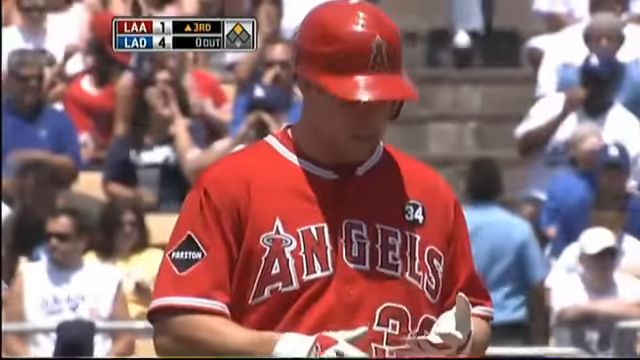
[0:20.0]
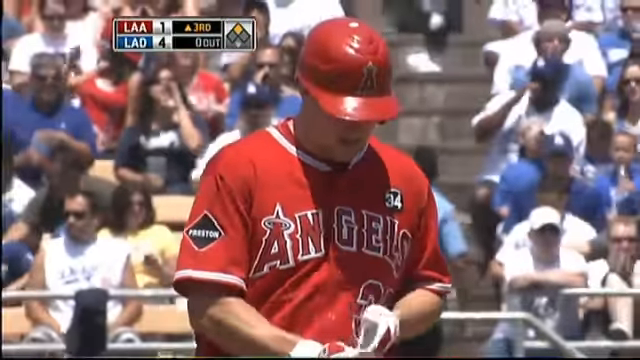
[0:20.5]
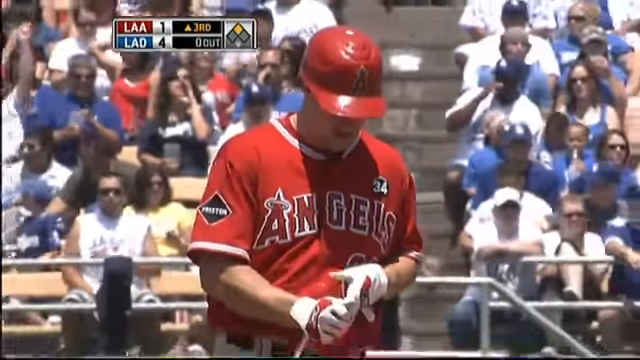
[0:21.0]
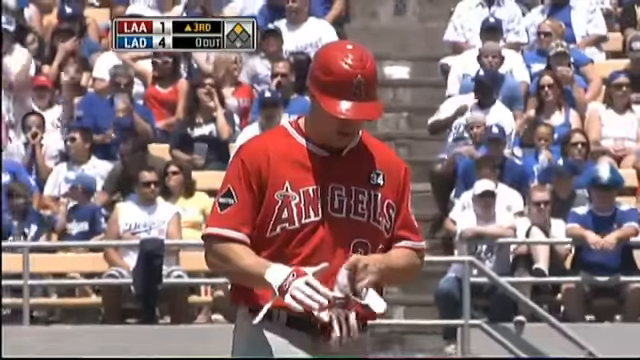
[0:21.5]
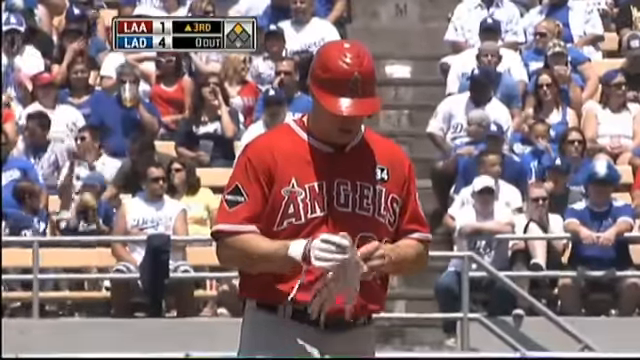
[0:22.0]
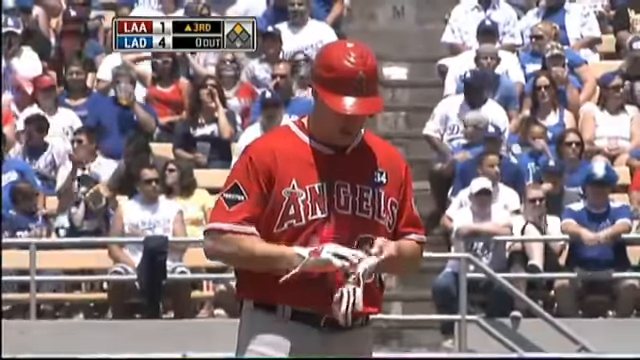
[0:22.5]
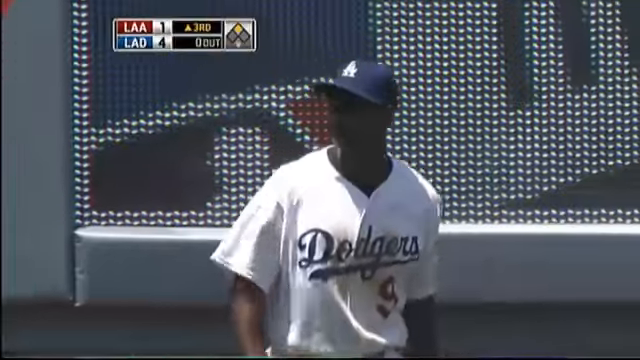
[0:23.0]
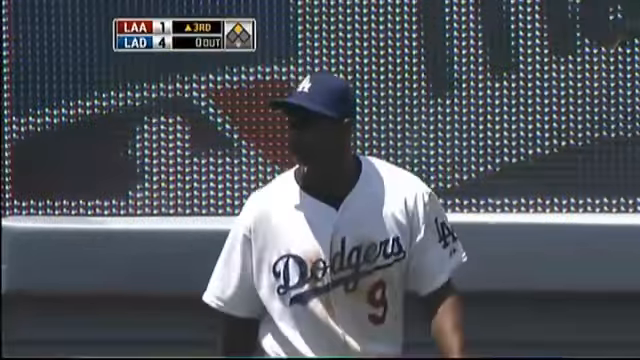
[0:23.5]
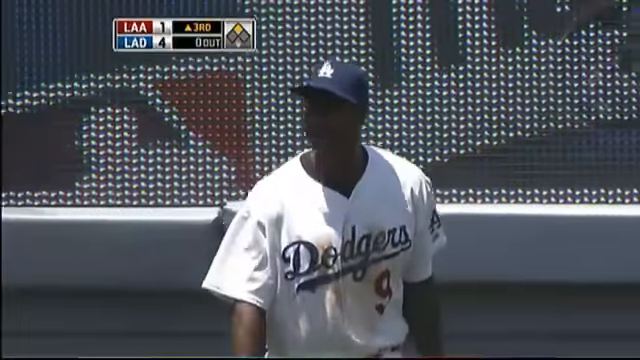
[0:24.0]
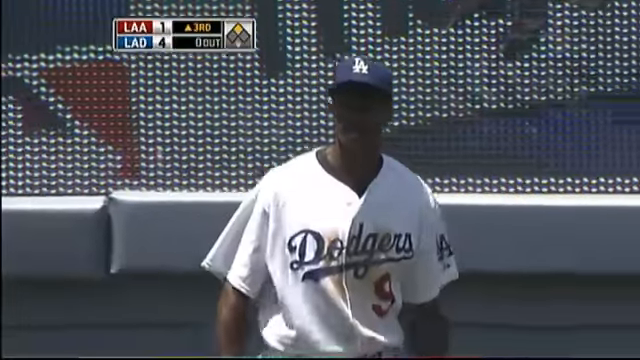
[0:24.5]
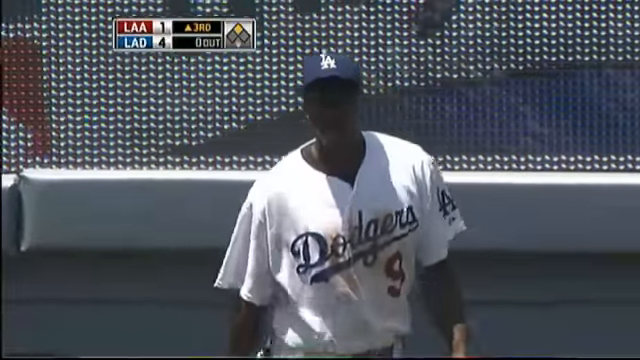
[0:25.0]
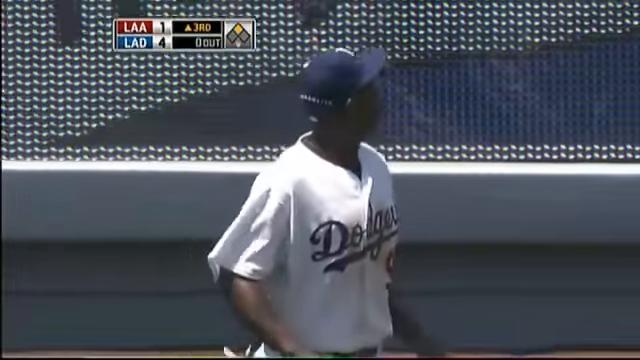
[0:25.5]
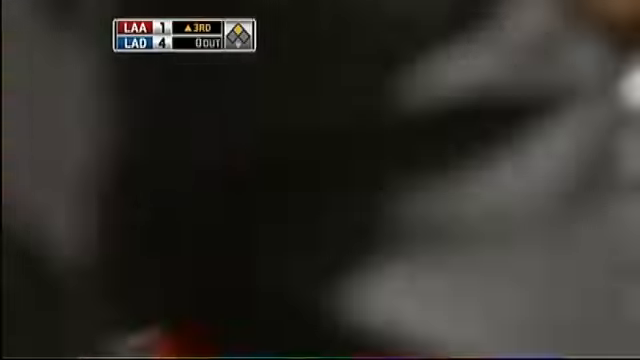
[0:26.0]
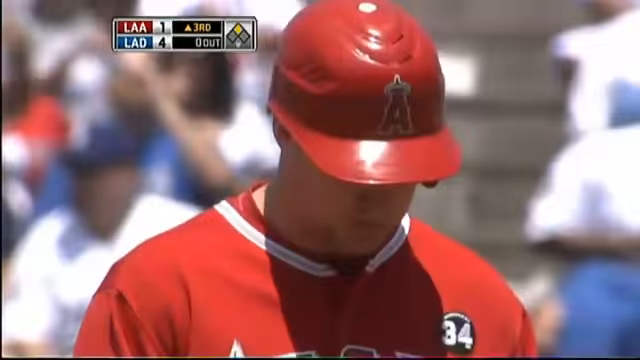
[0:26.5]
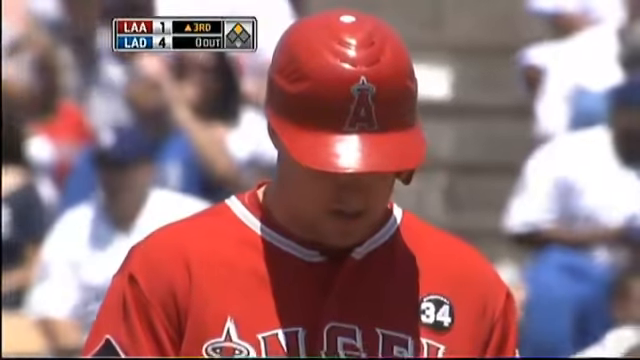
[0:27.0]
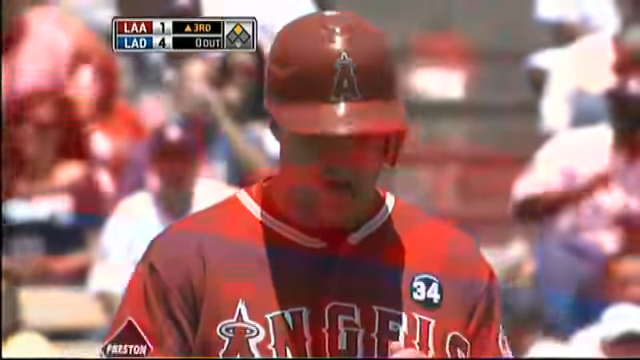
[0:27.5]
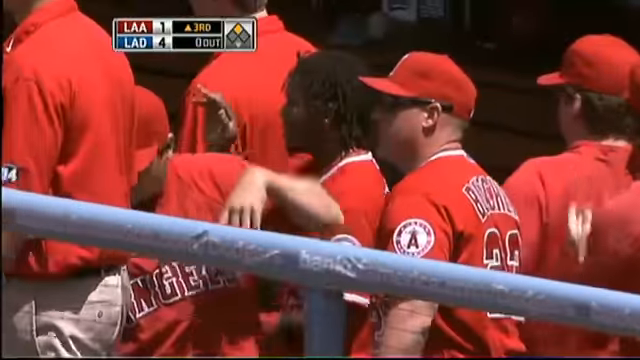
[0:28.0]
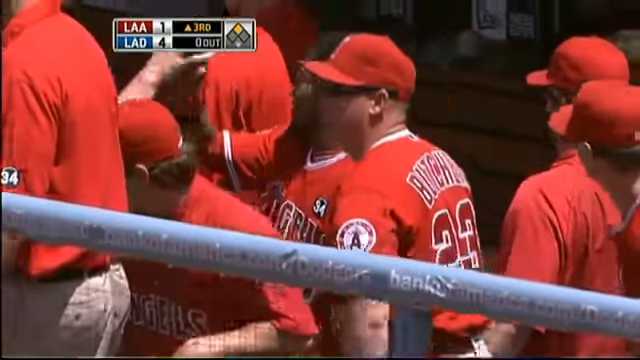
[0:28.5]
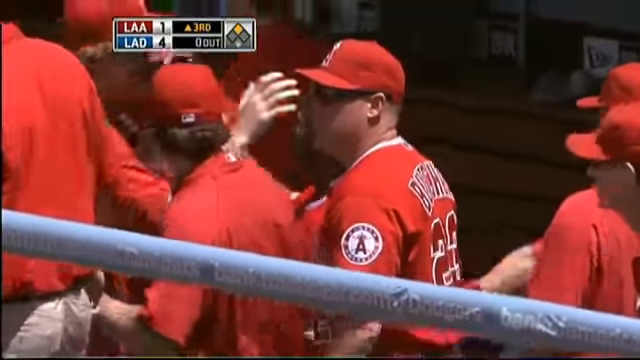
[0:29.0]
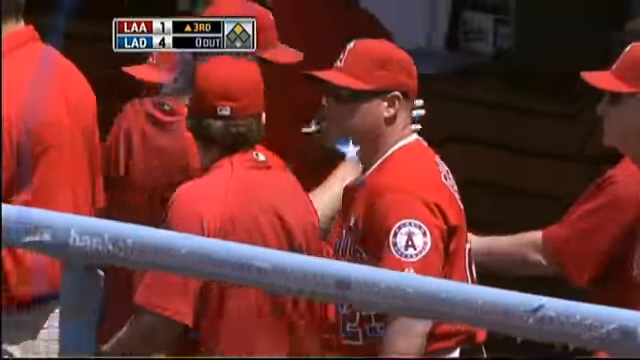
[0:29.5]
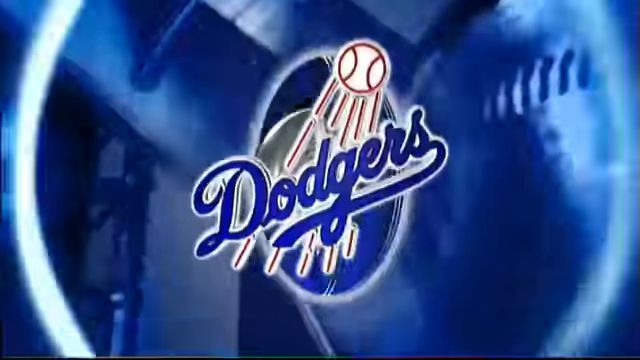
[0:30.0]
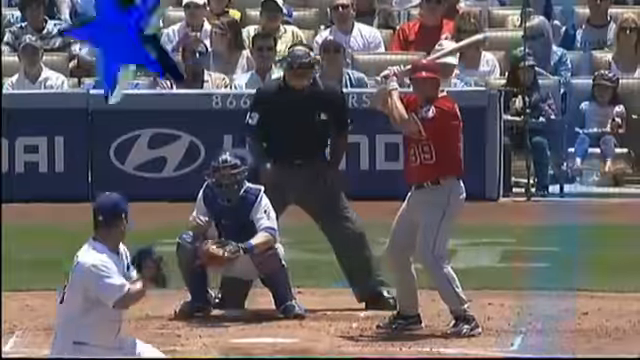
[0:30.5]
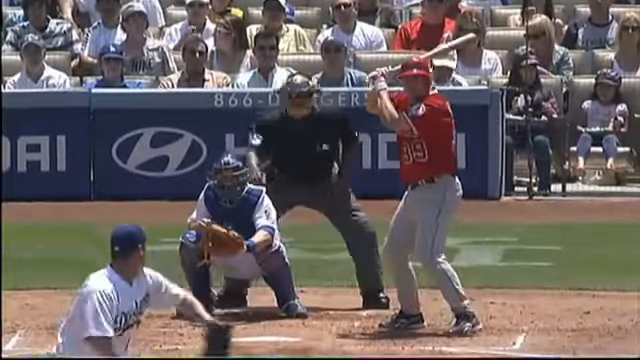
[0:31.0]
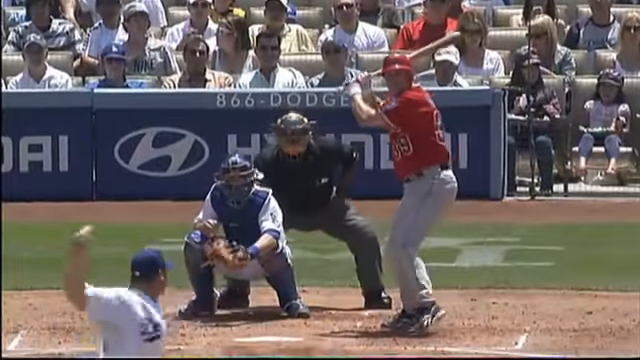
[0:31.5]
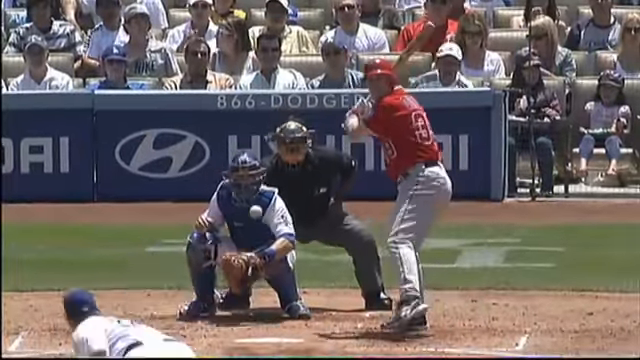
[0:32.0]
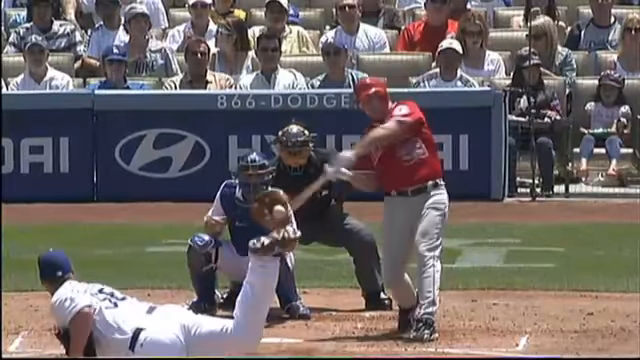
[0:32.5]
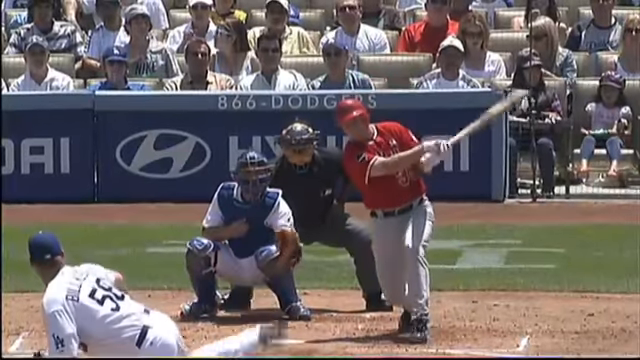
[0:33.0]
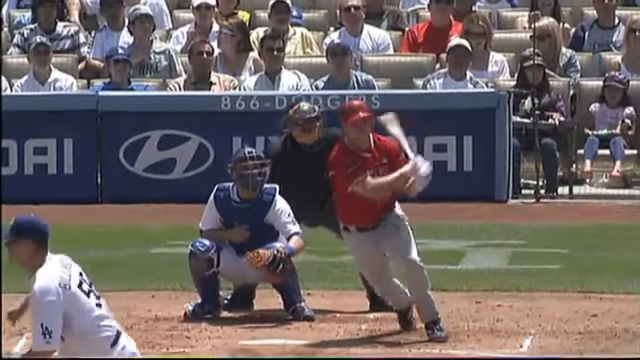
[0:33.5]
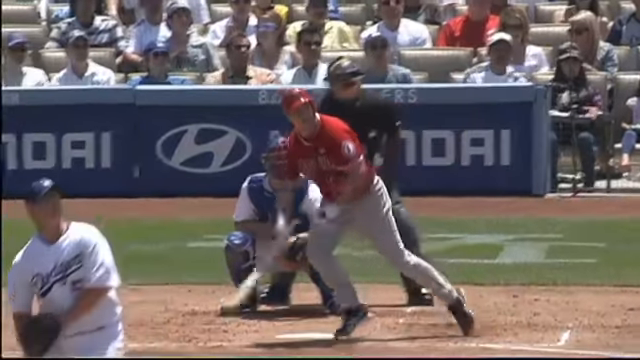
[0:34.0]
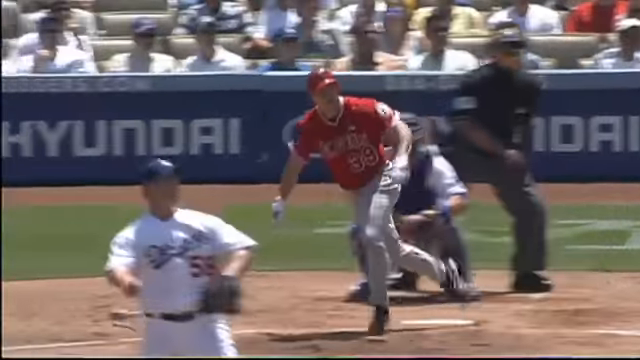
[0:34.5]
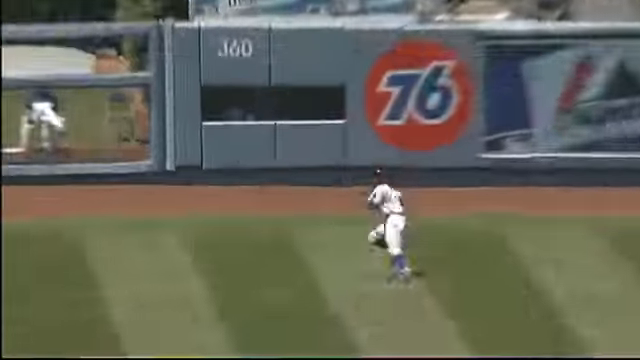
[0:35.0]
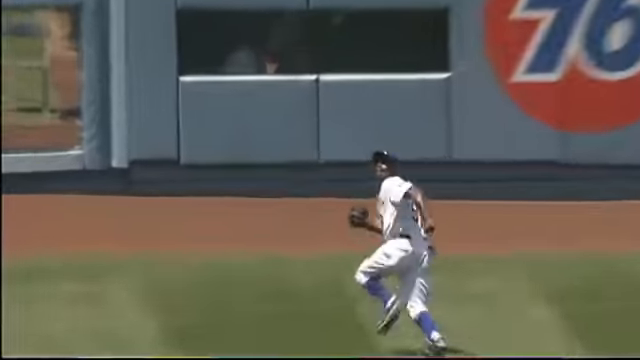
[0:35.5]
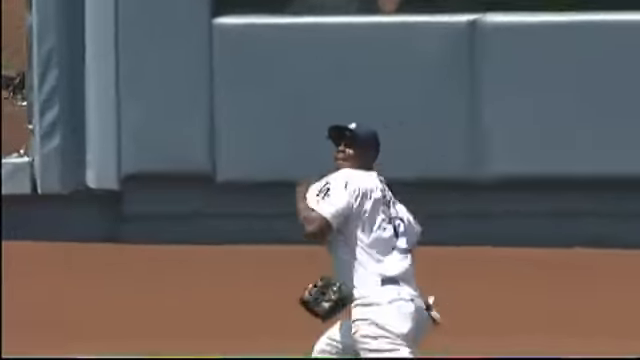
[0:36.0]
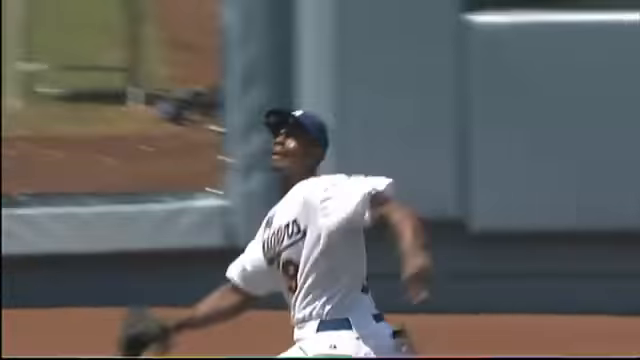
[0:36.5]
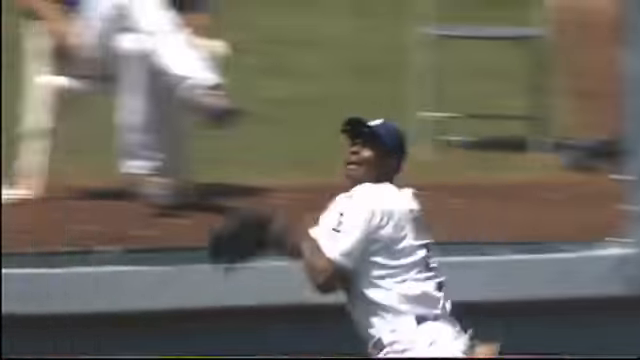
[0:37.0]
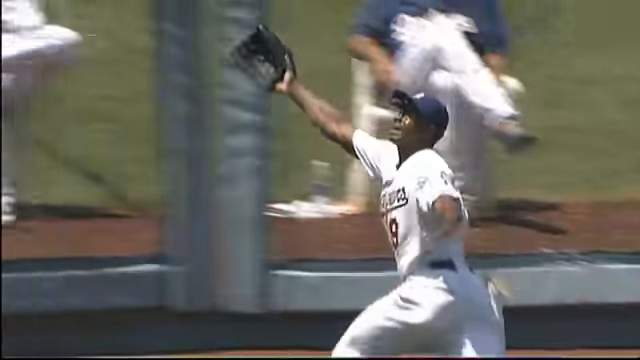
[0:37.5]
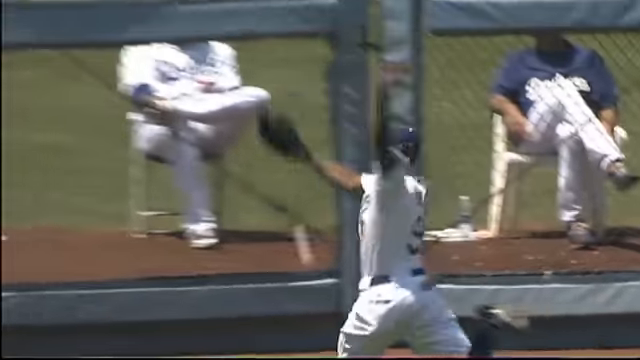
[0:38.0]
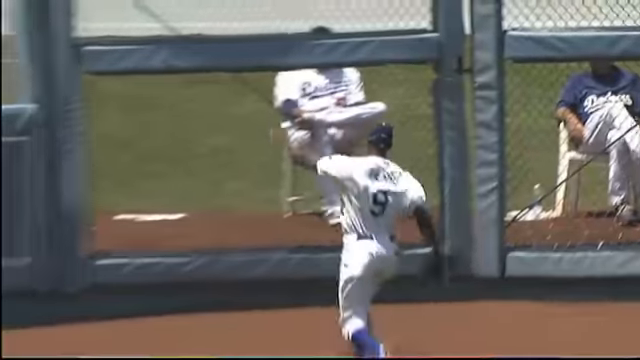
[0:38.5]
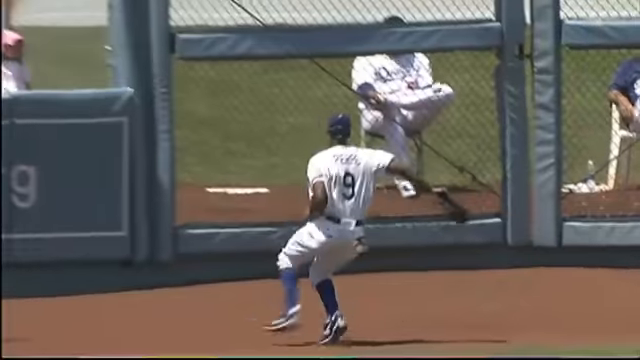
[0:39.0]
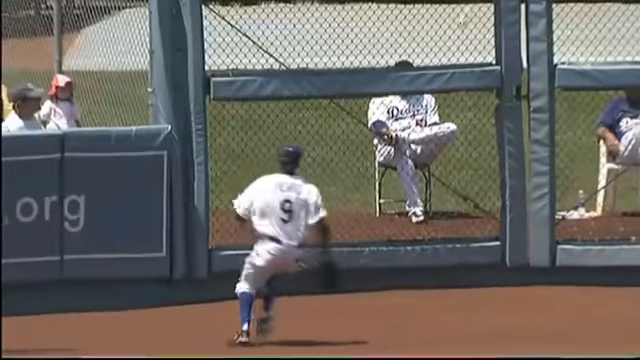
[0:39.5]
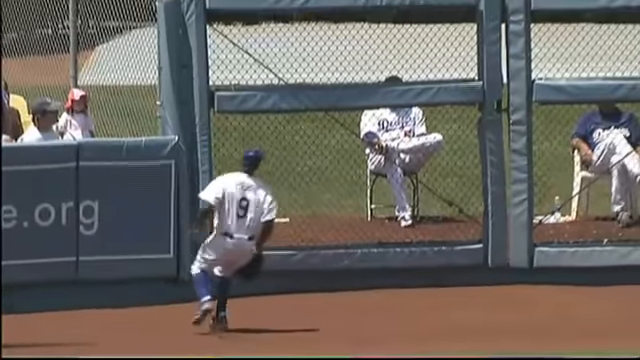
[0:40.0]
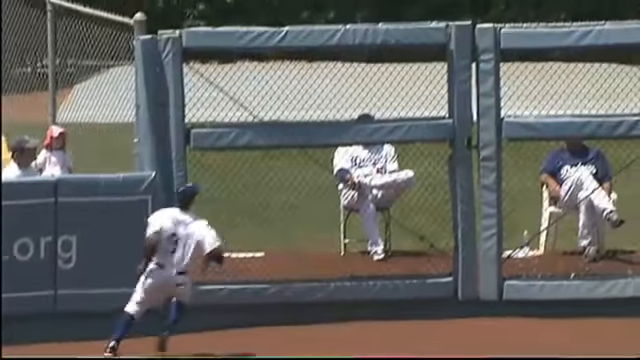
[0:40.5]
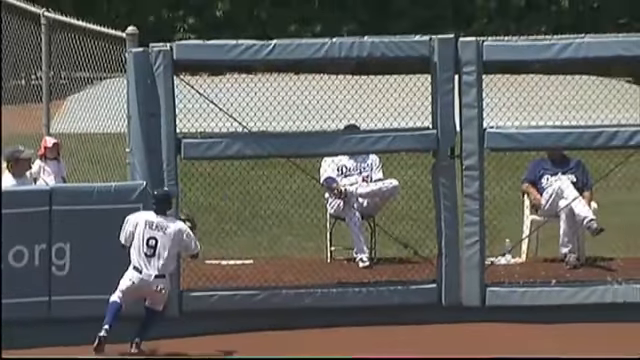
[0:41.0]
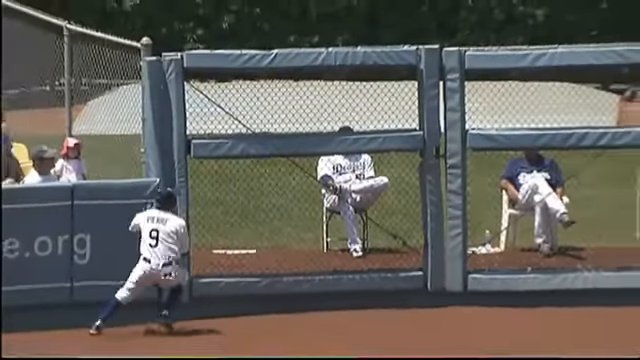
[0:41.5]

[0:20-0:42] The Los Angeles Angels player who got the hit stands on second base. He wears an all-red uniform with "angels" across the front and a red batting helmet with a capital "A" on it. A patch with the number 34 is over his heart, and a black patch with white writing is on his left shoulder. He takes off his white batting gloves. The outfielder is shown in the Dodgers' white home uniform with "Dodgers" across the front in blue. A replay of the hit to left field follows: the ball just barely goes over the glove of the left fielder, who wears a white uniform with the number nine on his back in blue.